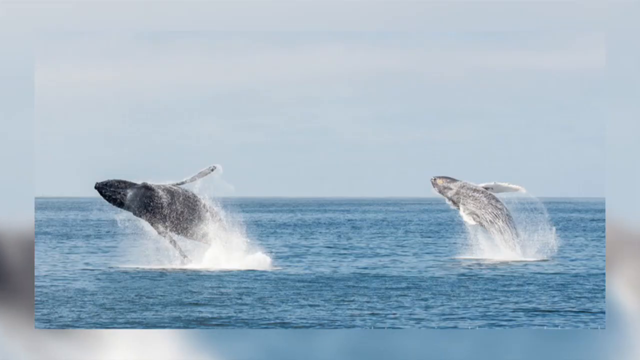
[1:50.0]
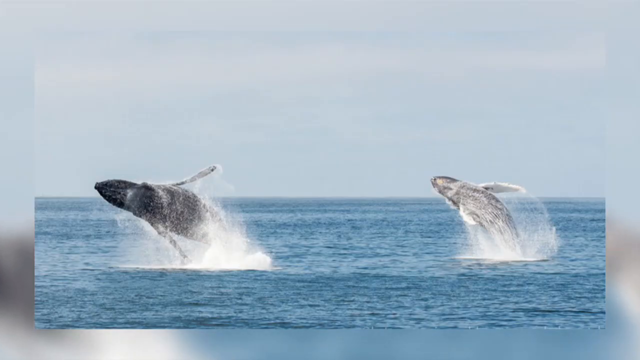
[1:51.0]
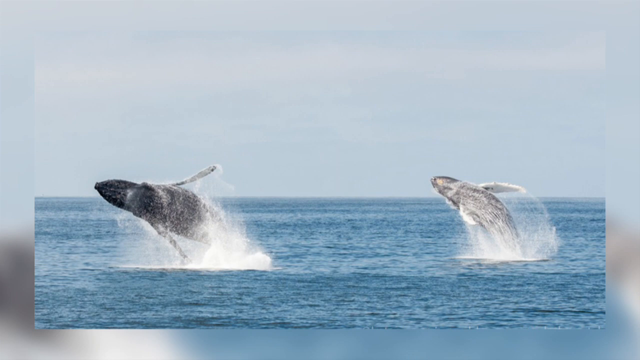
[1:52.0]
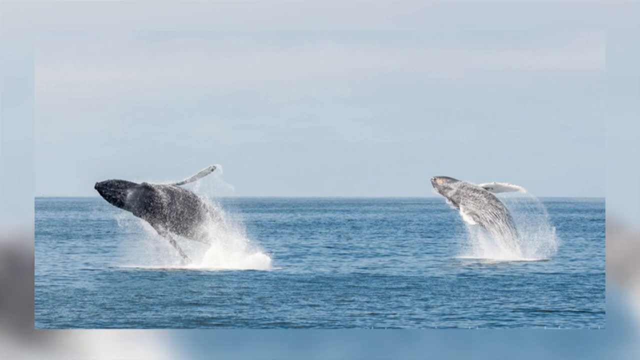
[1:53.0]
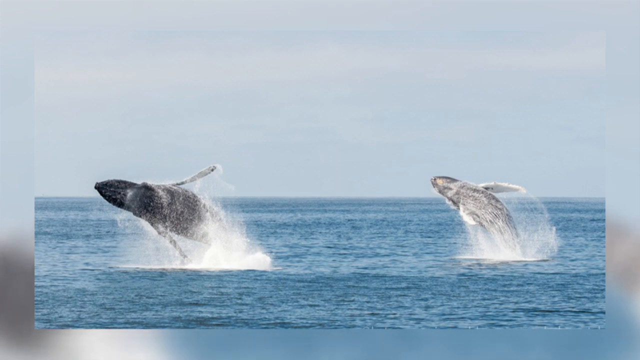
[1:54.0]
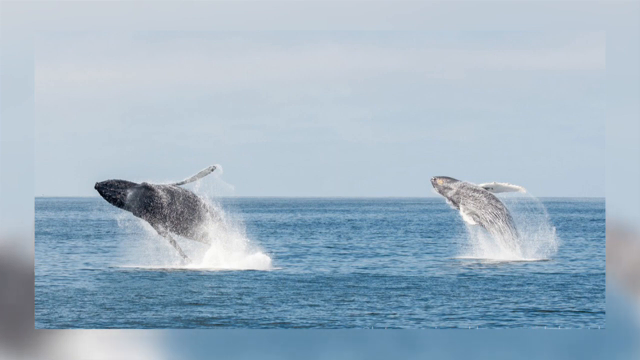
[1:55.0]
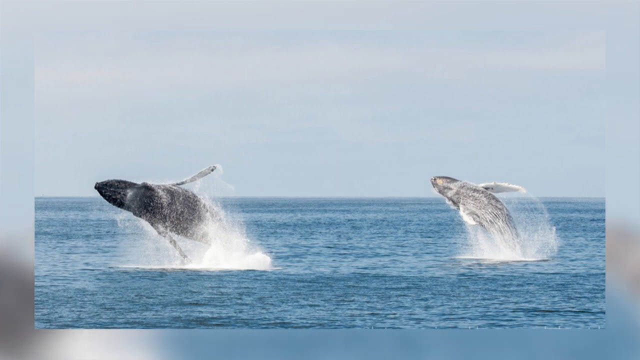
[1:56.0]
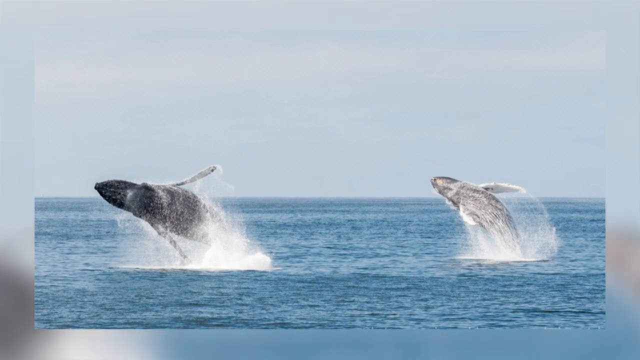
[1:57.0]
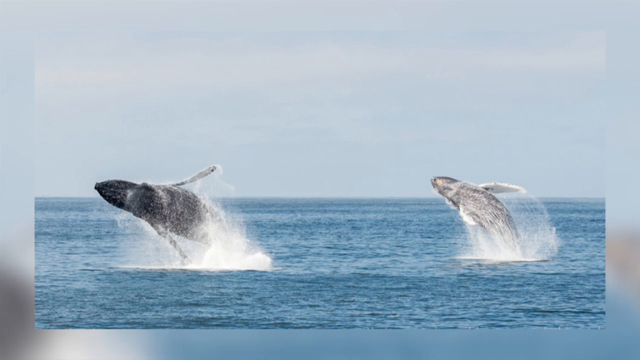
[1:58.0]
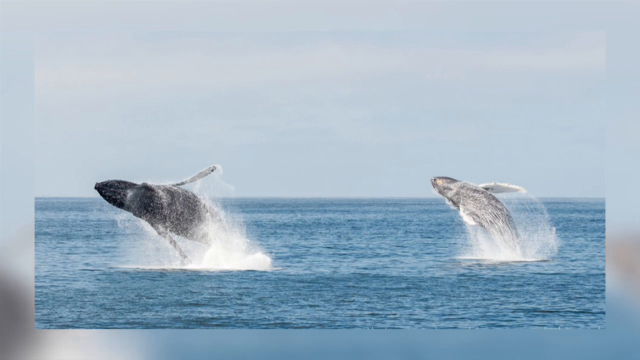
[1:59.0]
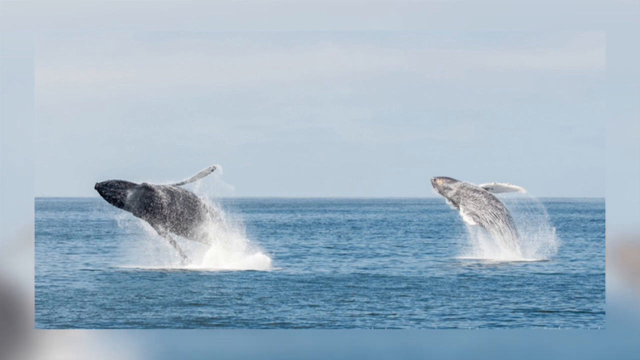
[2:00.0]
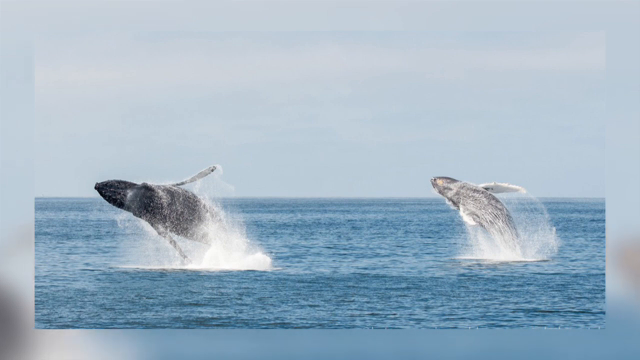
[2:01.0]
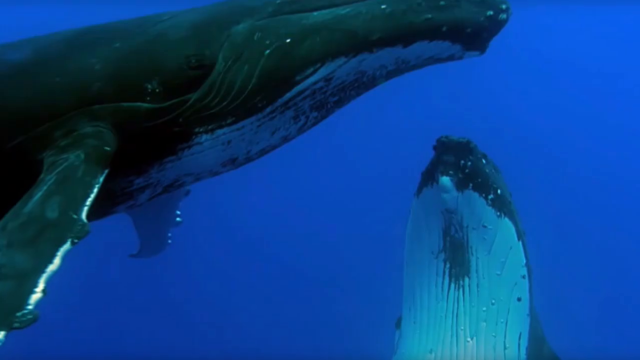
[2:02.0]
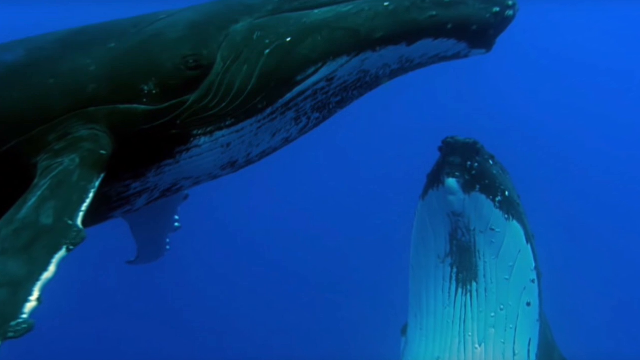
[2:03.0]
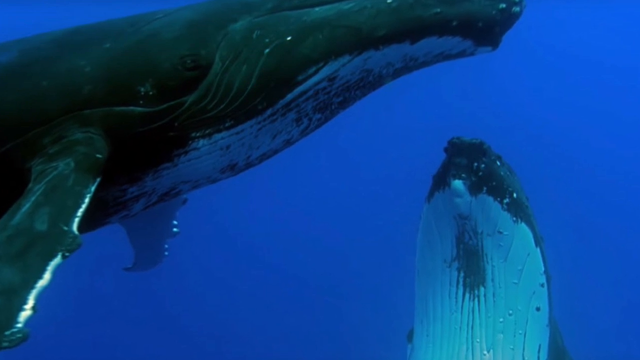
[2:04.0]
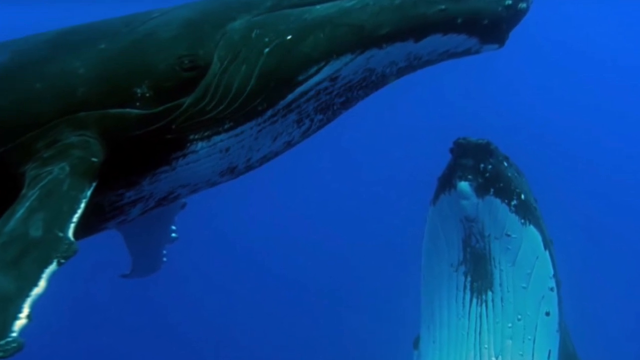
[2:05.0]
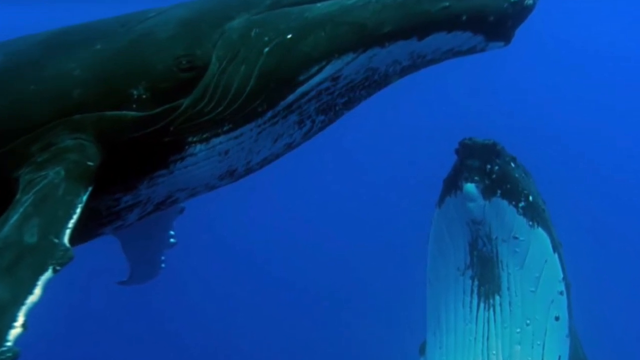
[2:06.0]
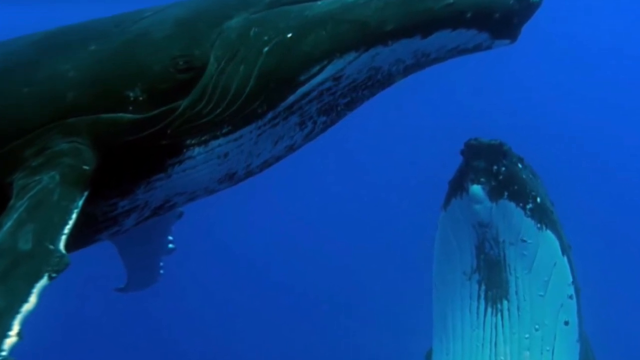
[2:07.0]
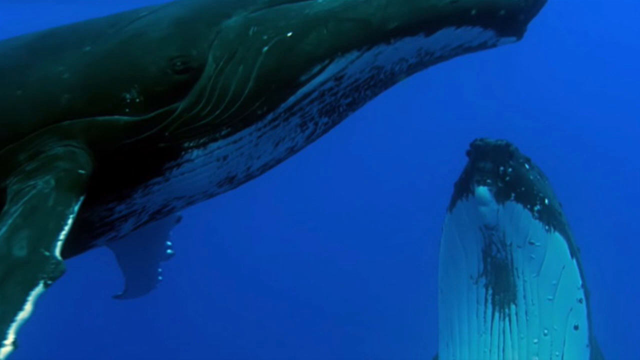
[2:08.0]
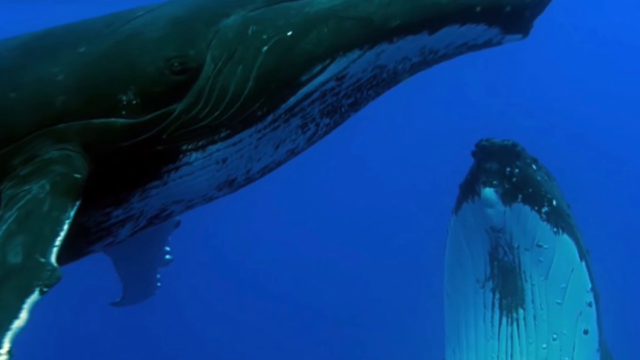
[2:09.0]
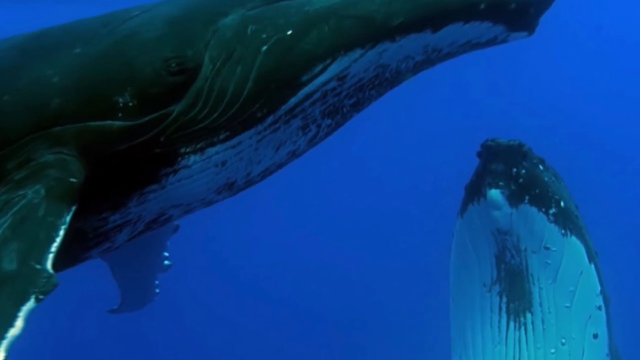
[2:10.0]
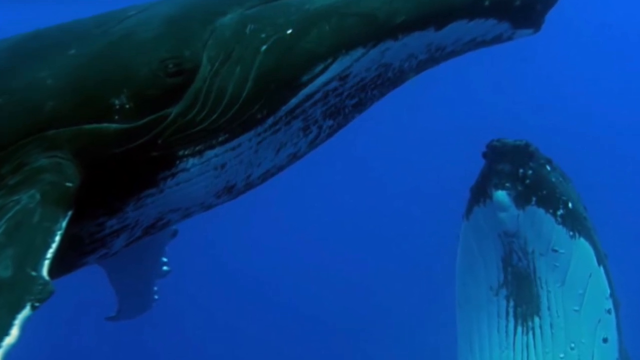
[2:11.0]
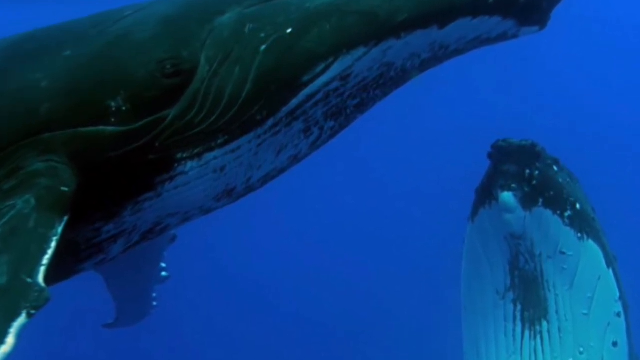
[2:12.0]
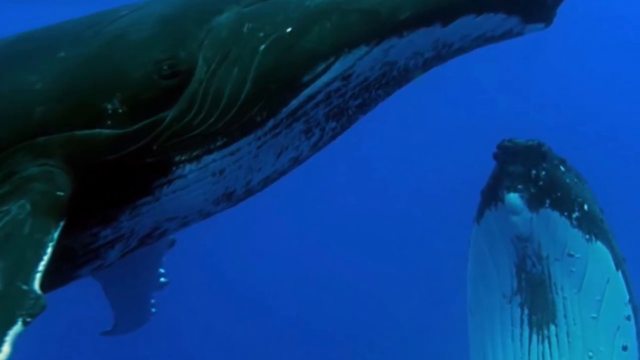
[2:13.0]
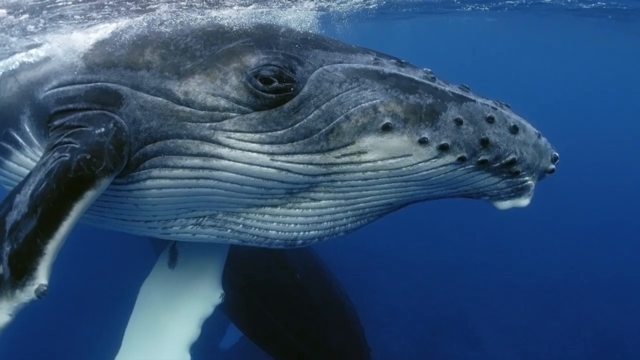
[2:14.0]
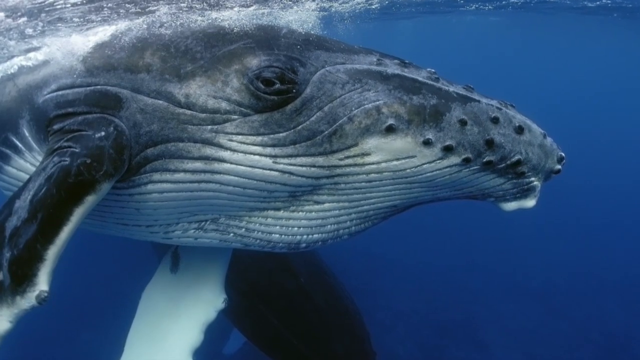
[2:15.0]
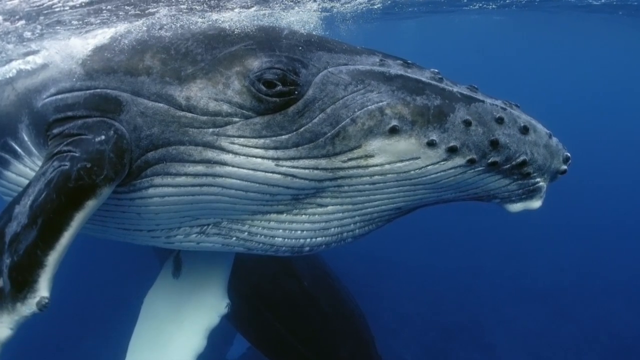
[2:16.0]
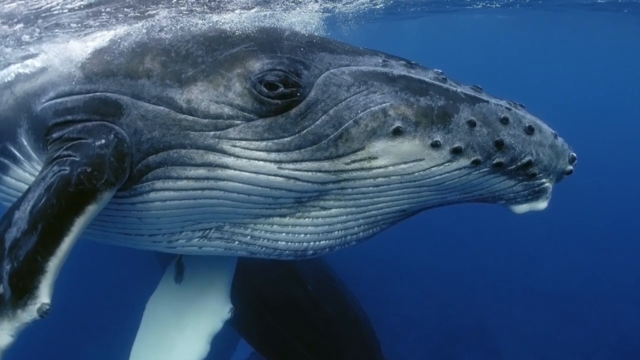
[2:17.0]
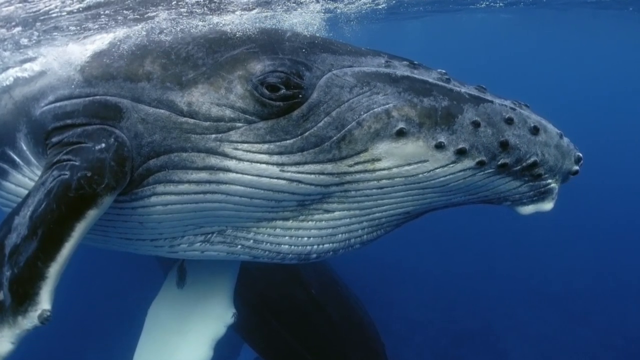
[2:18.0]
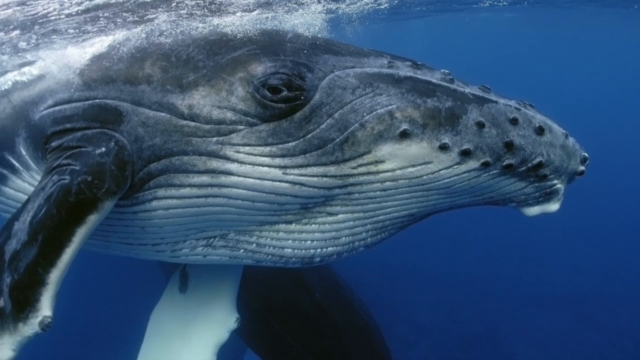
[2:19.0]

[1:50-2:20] A photo of two whales jumping out of the water is on screen, not occupying the whole frame. The upper half of its background is the sky, and the lower part has a slightly out-of-focus background. Then an image shows two large whales underwater in different positions: the whale in the left-hand corner is horizontal, while the one in the lower right is vertical, and the lower part of the latter's body is visible, almost completely white. Then, for a few seconds, another photo of a whale appears; it rotates slightly counterclockwise and is zoomed in very little, and in the upper part of the frame, in the center, the animal's eye is clearly visible.